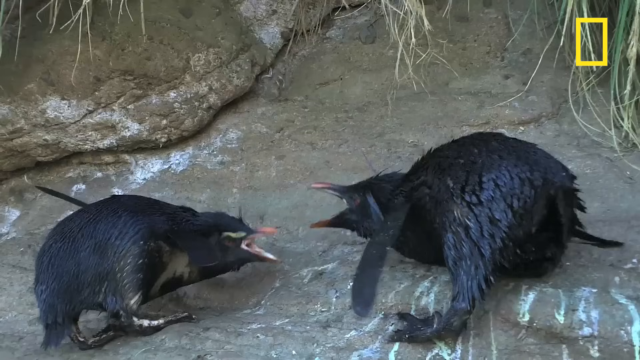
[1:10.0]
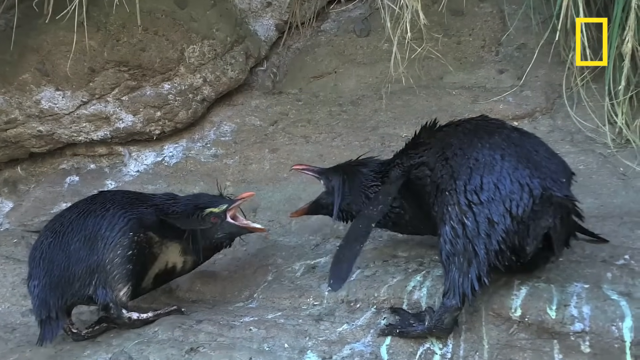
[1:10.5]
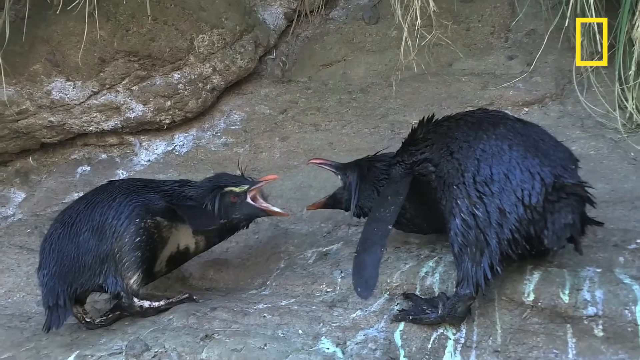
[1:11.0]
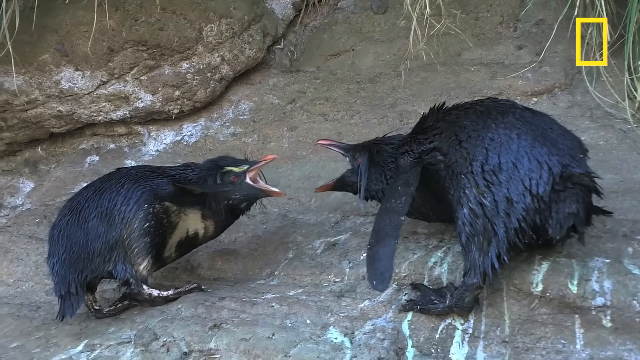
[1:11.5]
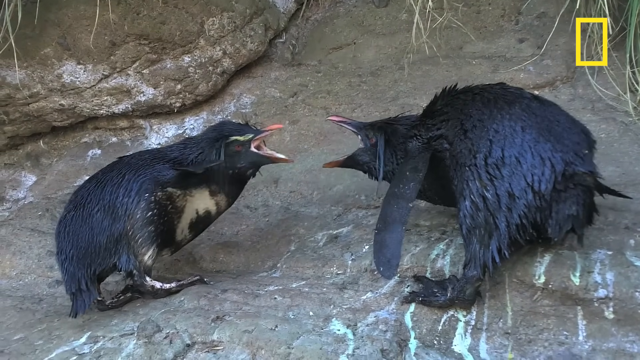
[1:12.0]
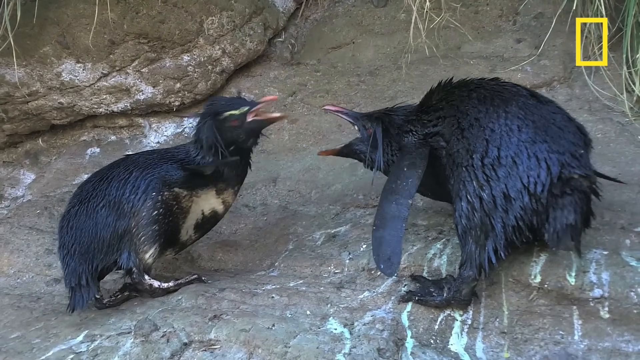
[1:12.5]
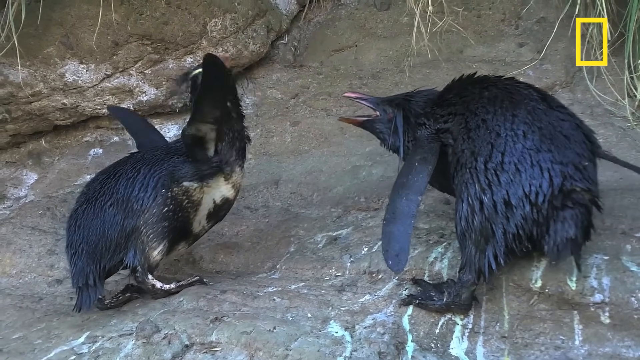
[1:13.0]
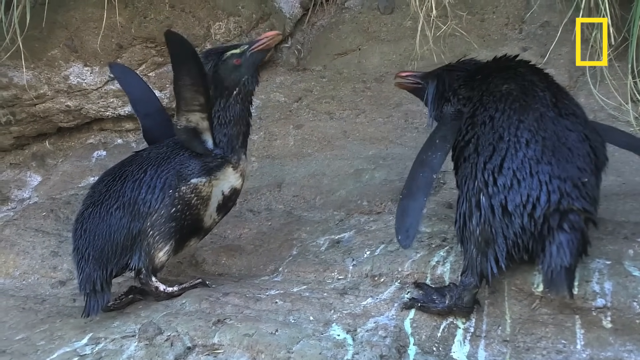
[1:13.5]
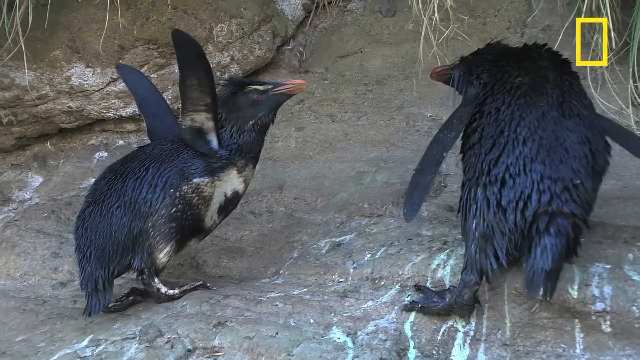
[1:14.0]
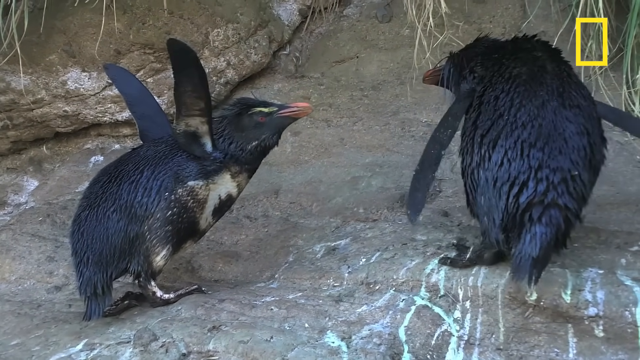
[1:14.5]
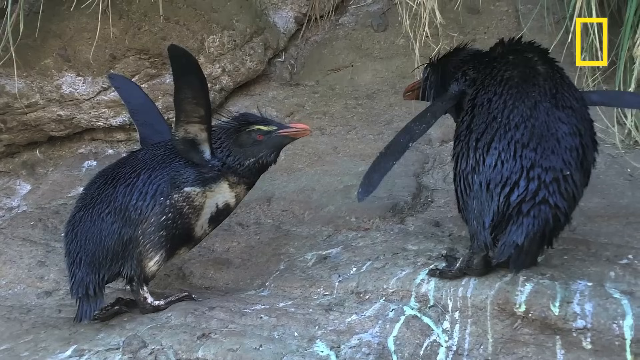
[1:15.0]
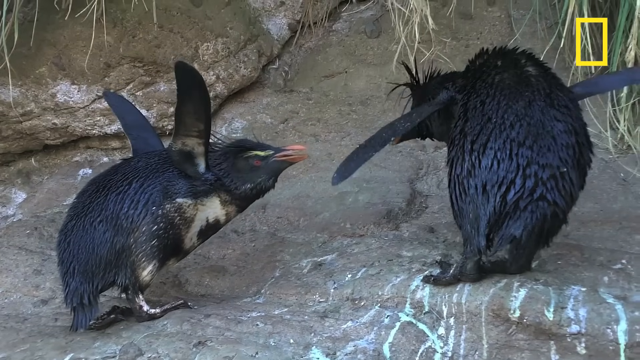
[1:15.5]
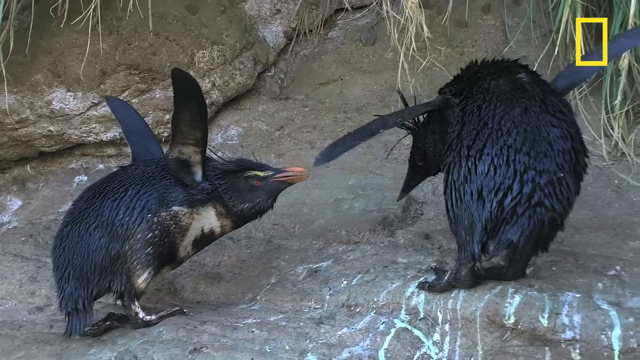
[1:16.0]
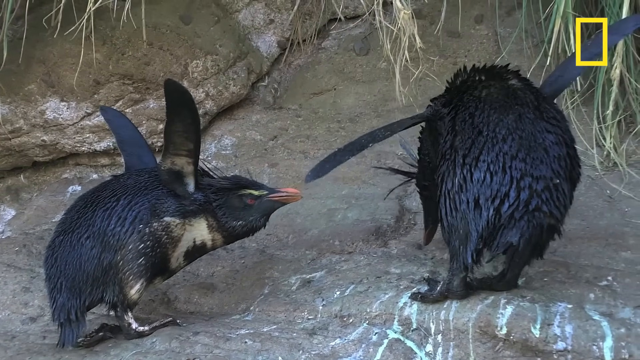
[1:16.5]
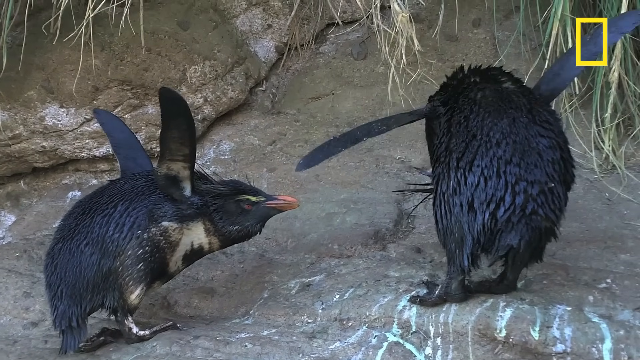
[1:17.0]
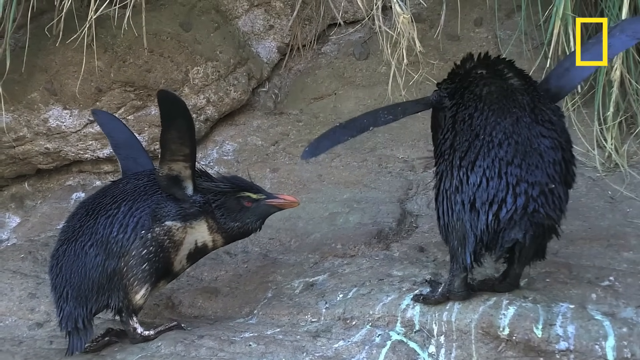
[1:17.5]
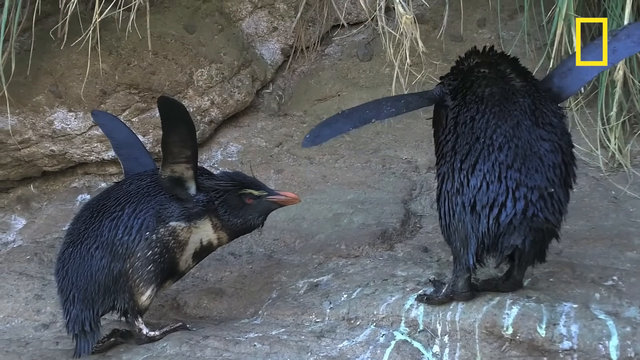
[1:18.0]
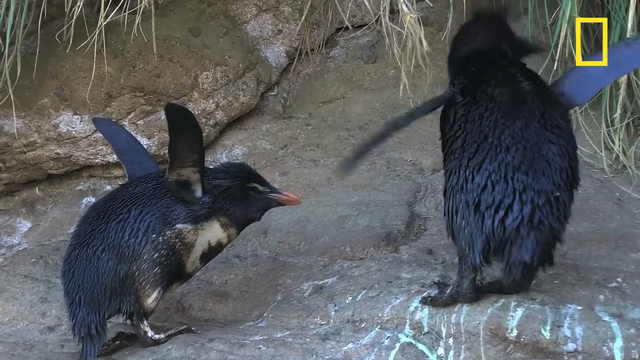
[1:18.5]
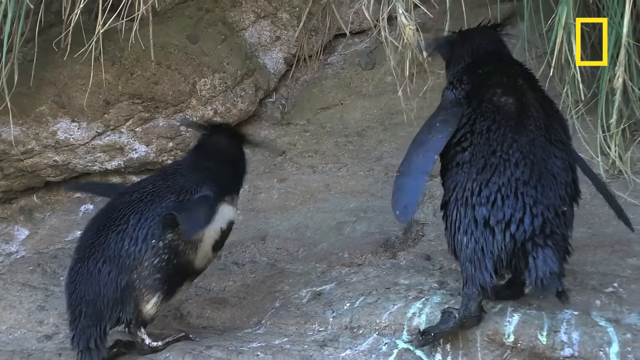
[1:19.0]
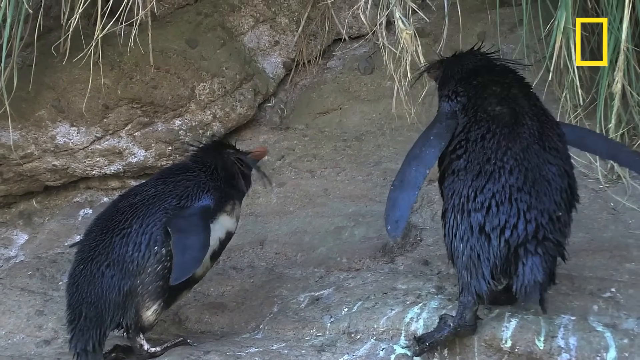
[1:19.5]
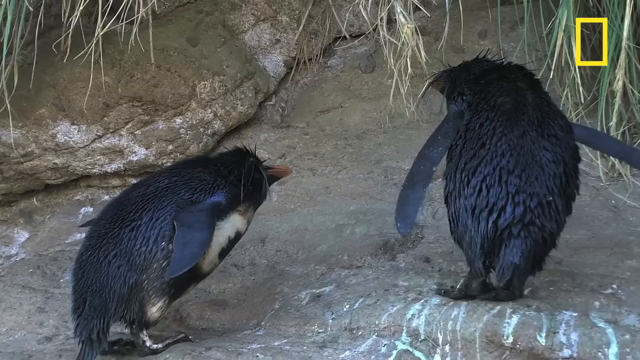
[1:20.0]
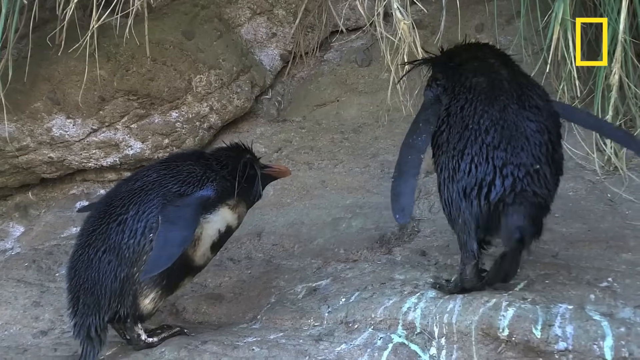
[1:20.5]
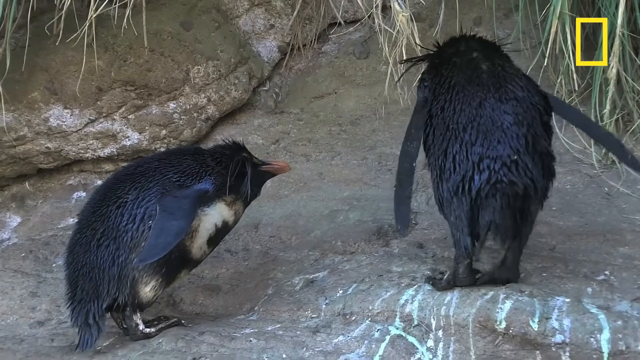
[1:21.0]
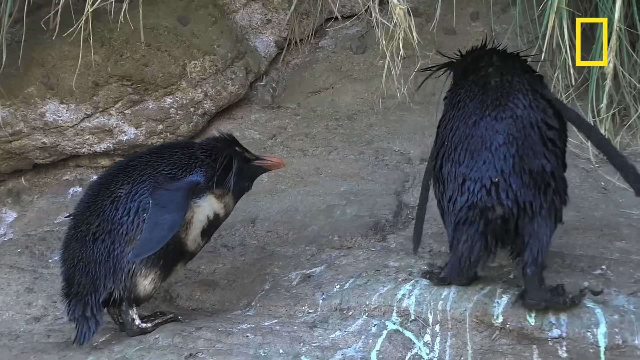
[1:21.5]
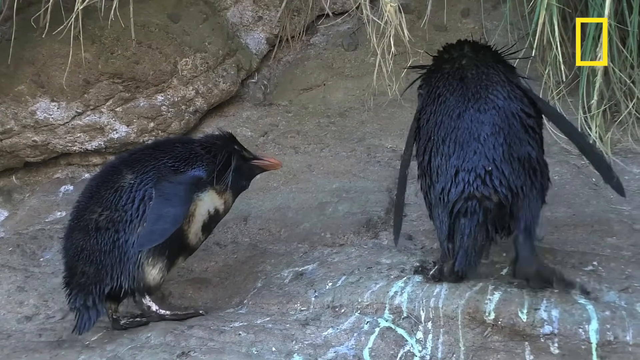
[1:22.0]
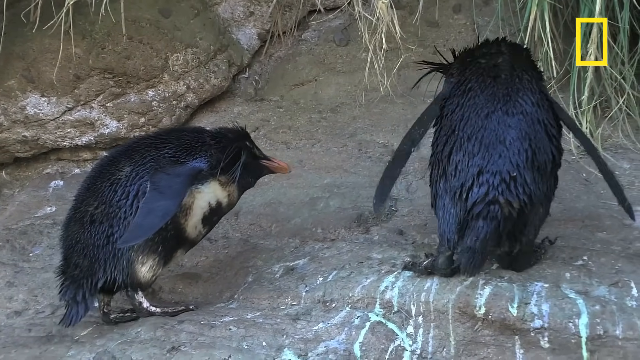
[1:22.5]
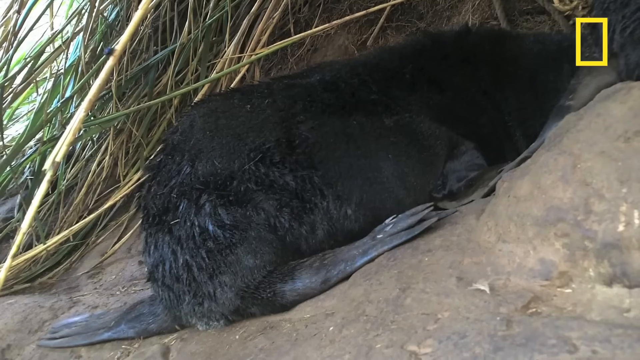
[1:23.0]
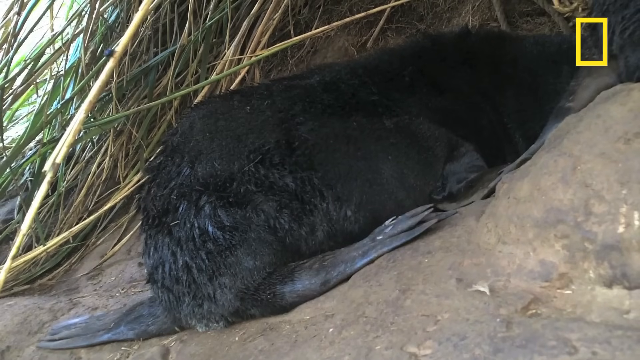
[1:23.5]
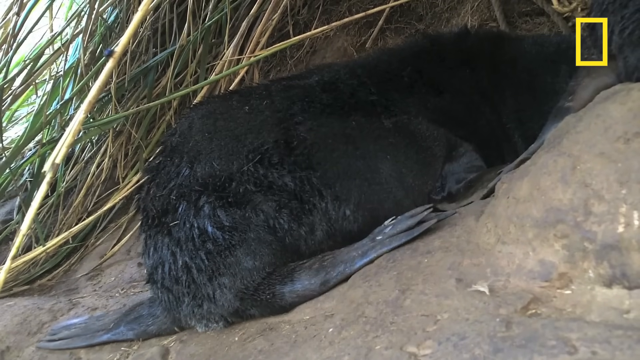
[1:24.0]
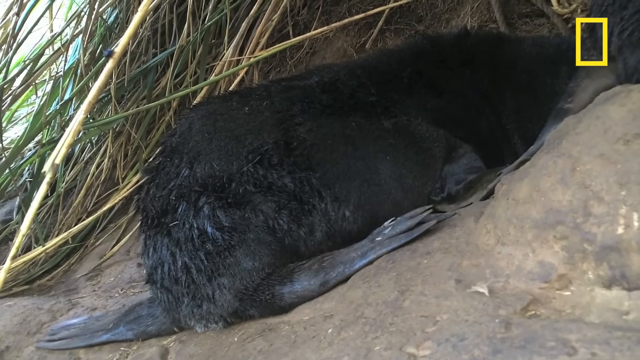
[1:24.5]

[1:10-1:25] Two penguins are kind of playing with or fighting each other, looking almost like they are doing kung fu. They have their flippers out and kind of bite at each other's mouths with their beaks. It really does look like they are fighting. Their fur looks very slick and black, almost like maybe they were in some kind of oil spill, though they seem kind of healthy. One moment they look mad, and the next it looks like they are bowing to each other. Then the video cuts to a shot of one of them kind of laying down on the rocks.